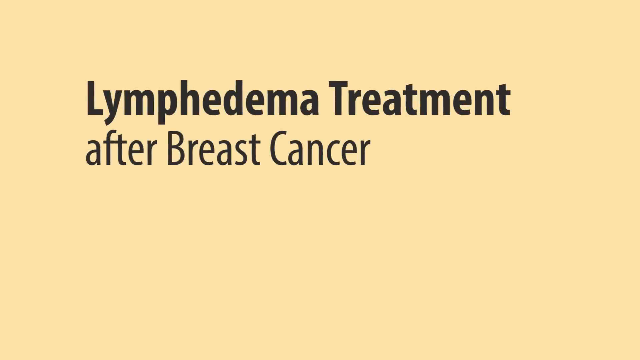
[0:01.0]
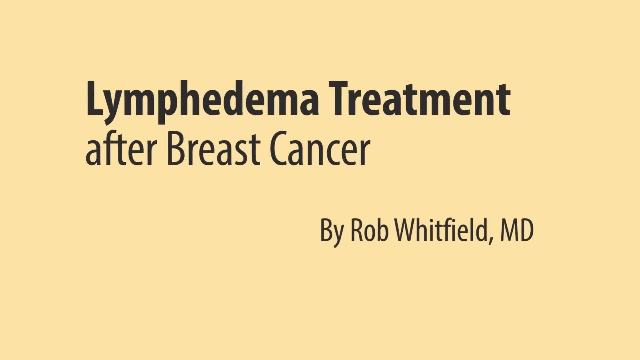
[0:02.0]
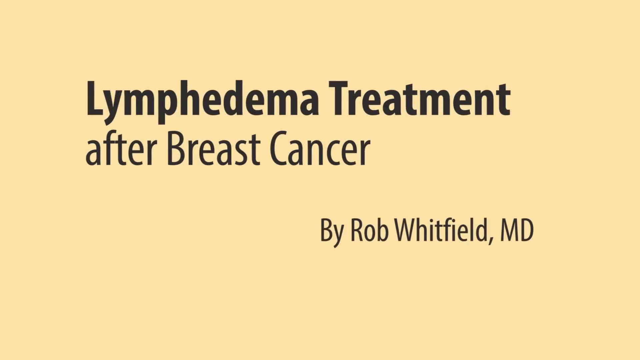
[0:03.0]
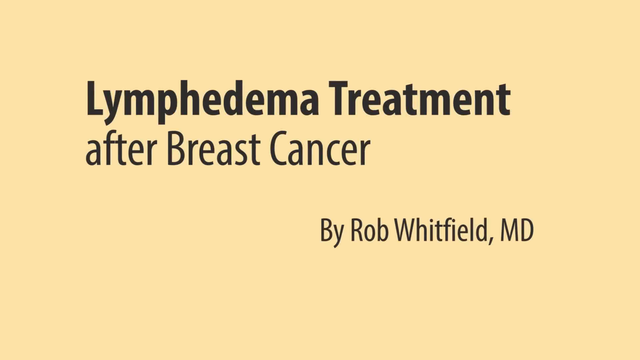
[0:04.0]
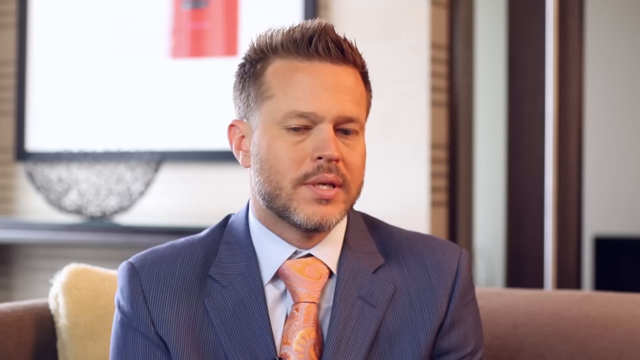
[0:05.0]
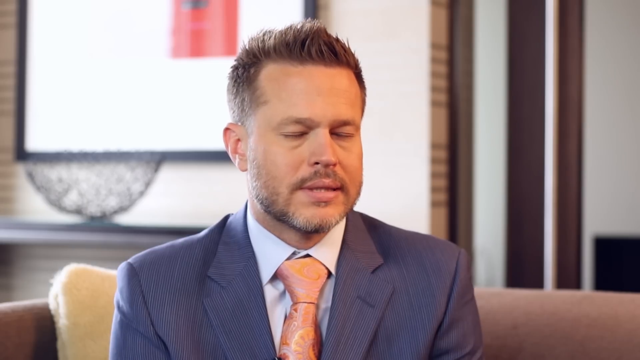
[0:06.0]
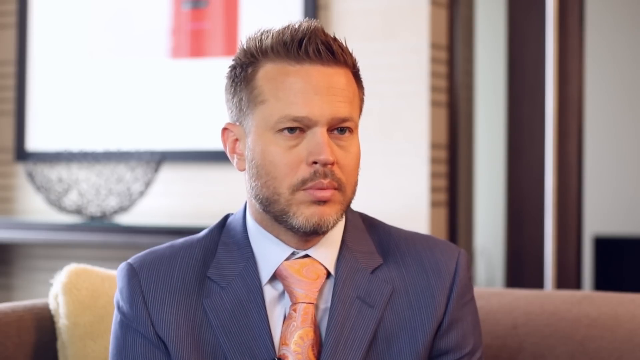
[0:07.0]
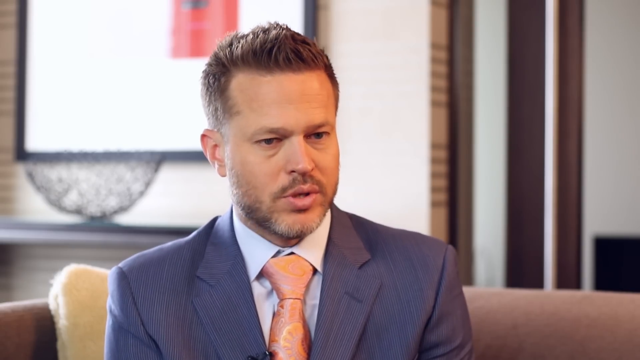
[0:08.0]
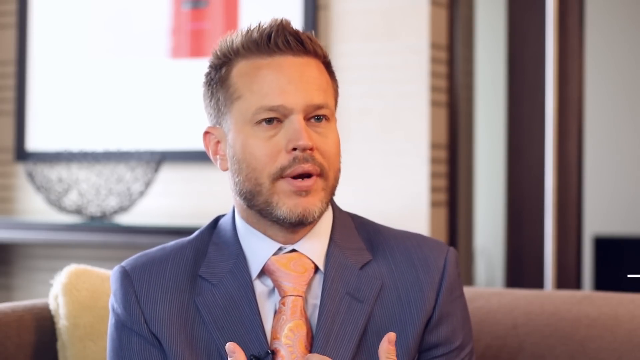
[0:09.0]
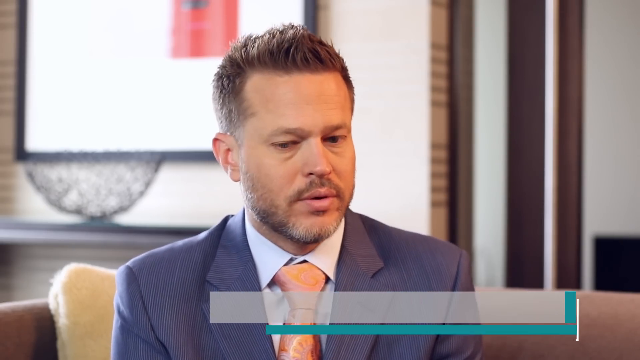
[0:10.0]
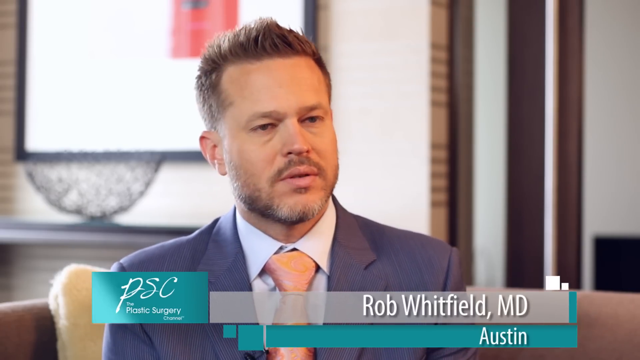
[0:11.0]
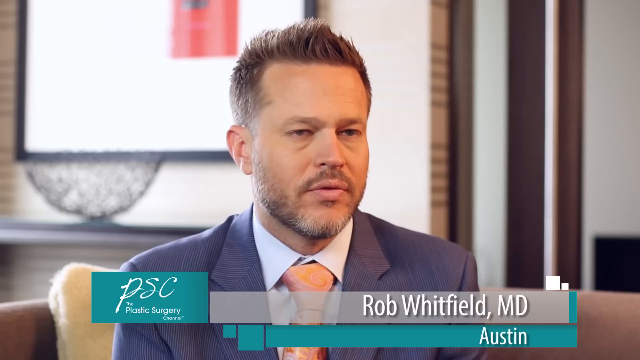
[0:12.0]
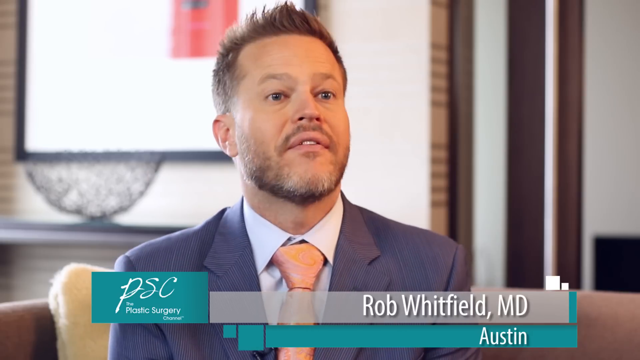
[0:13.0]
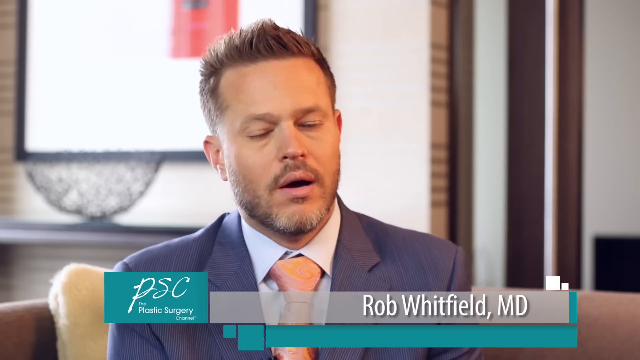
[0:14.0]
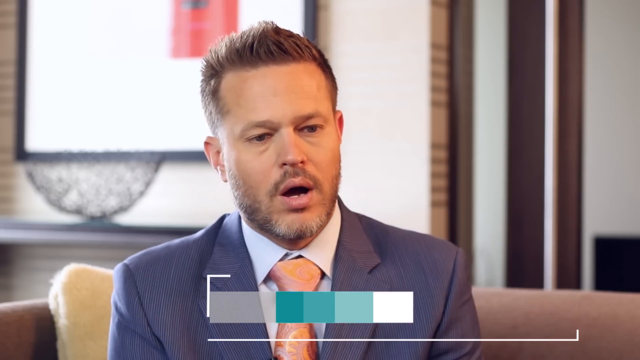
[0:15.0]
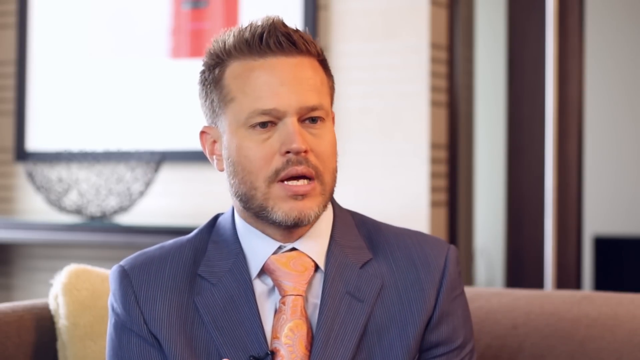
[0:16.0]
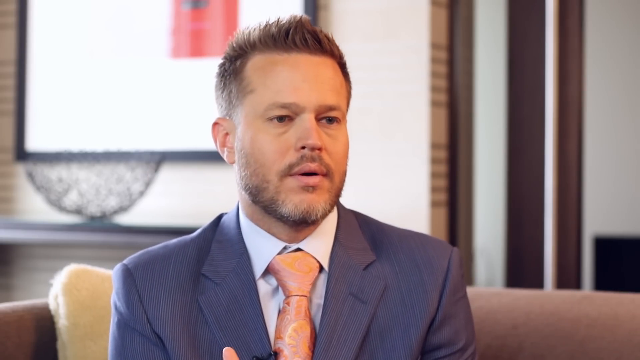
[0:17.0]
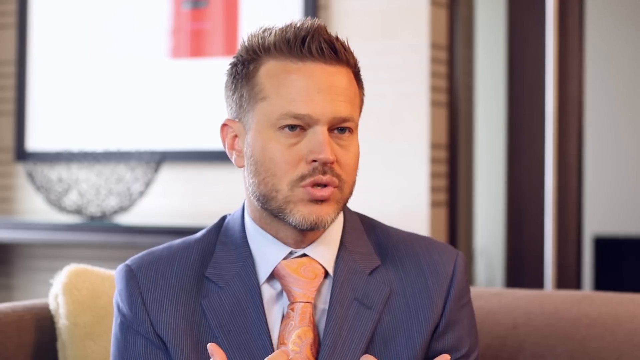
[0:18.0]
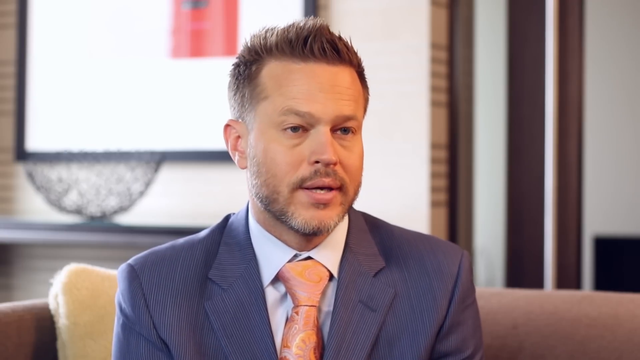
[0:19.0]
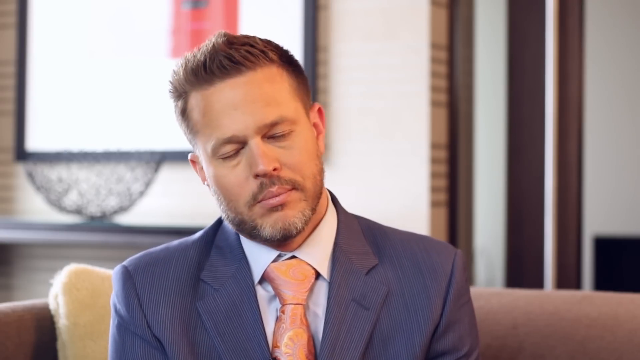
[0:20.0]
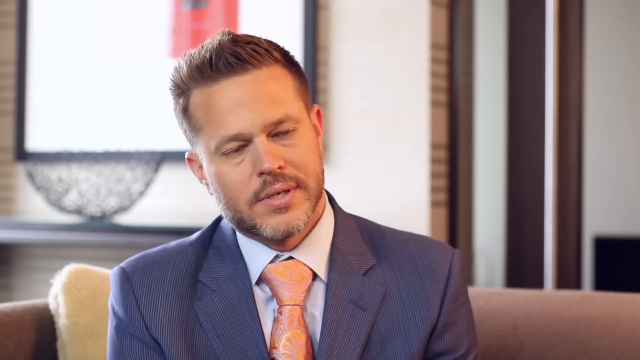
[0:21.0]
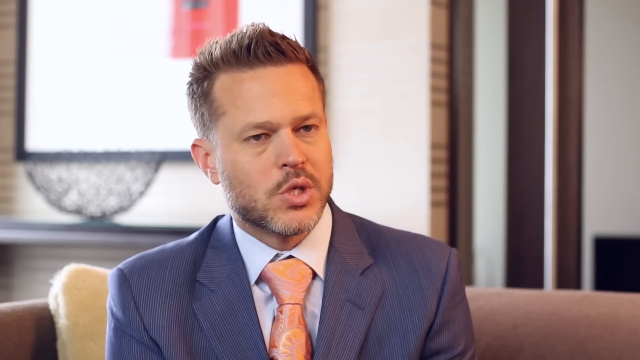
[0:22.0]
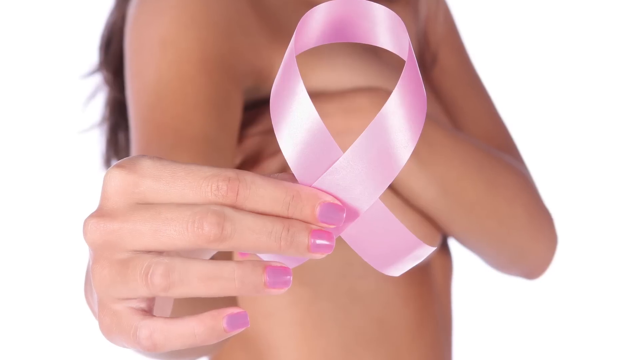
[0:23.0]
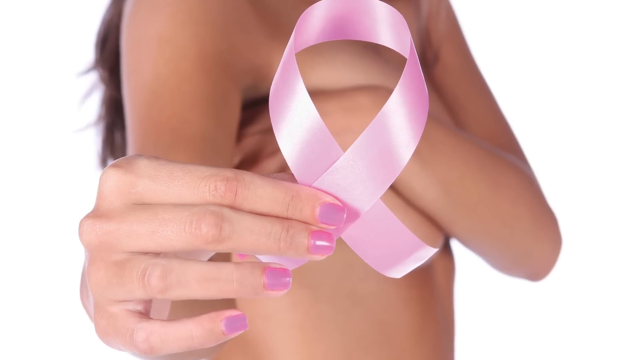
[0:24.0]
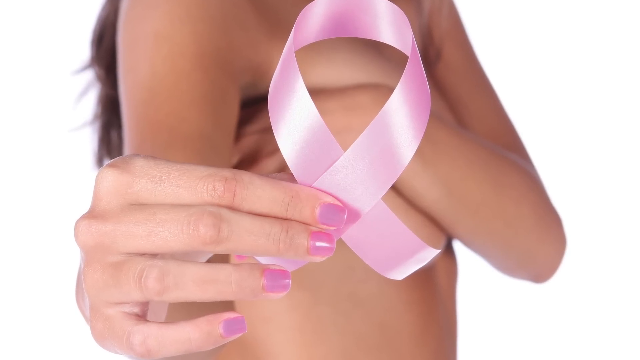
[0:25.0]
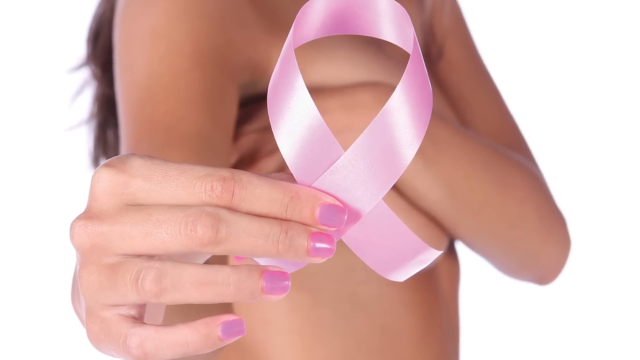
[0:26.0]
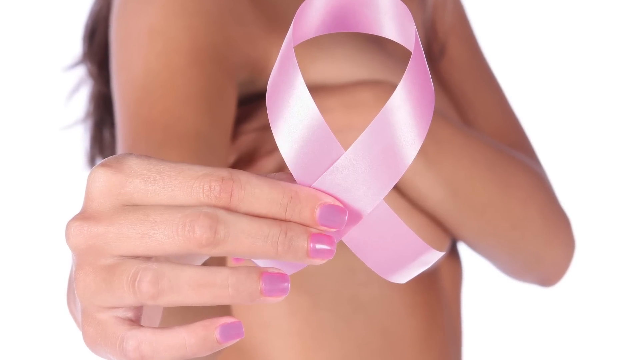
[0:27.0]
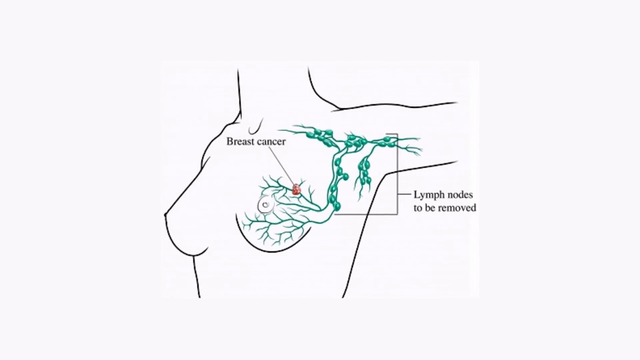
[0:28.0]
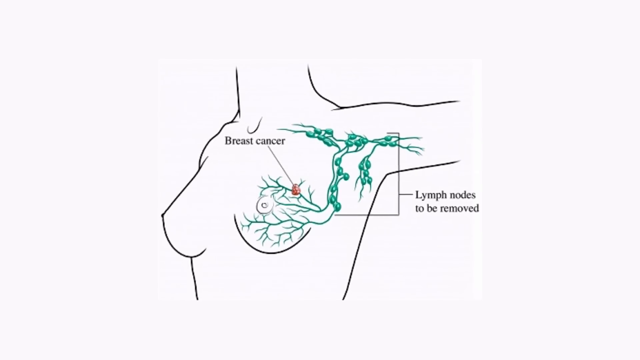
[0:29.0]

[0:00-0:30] A light tan background shows black text, with bold black text toward the top center, reading "lymphedema treatment after breast cancer by Rob Whitfield, MD." The video then changes to footage of a middle-aged Caucasian man in a gray pinstripe suit, a light gray button-up shirt and a pale orange tie. He has short, dirty blonde or light brown hair spiked upward and a closely shaven beard and mustache. He is seated on a tan couch. The room behind him is well lit, with cream-toned walls, and a large square artwork hangs on the wall to his upper left; it has a thin black frame, a white background and a little red box in its bottom right. He faces the interviewer as he speaks. At the bottom of the screen, a small teal square with white text reads "PSC plastic surgery" followed by "Rob Whitfield, MD."